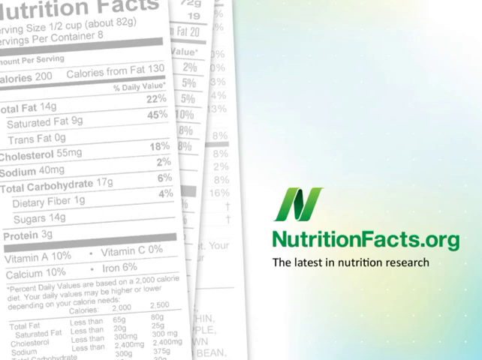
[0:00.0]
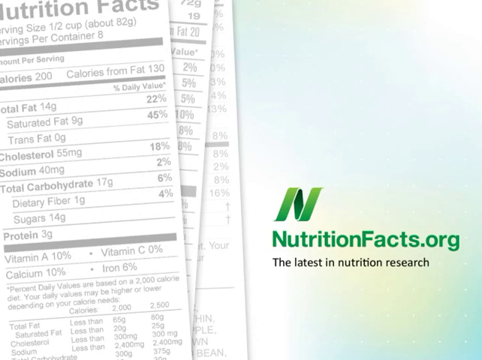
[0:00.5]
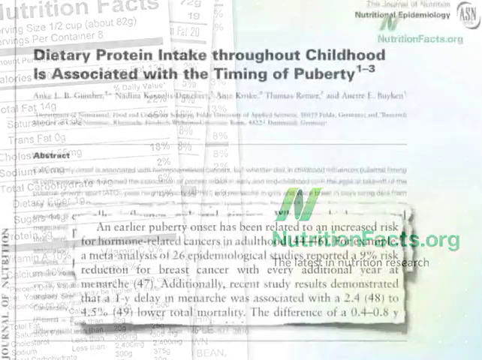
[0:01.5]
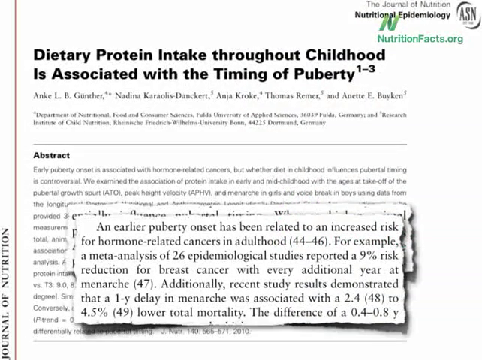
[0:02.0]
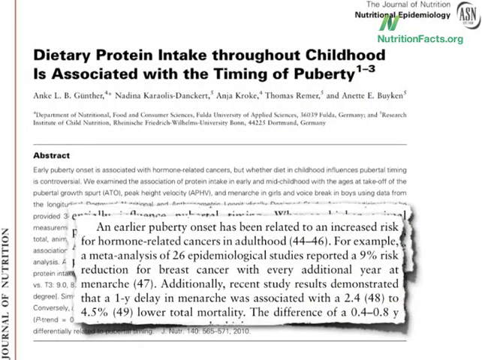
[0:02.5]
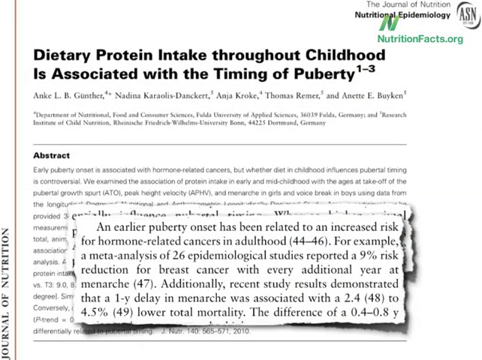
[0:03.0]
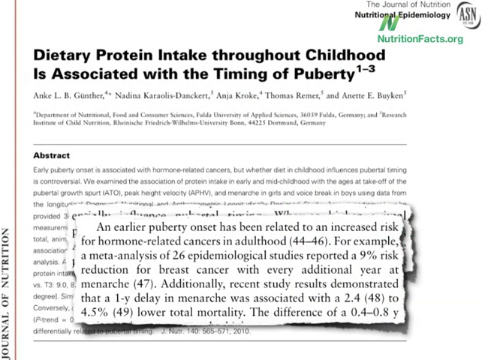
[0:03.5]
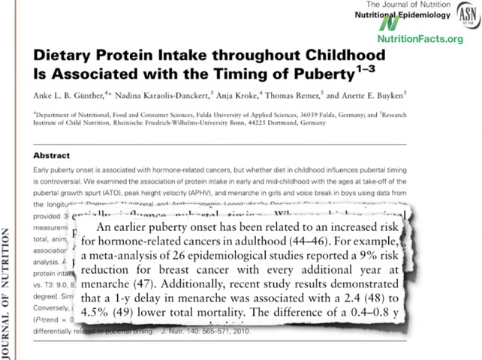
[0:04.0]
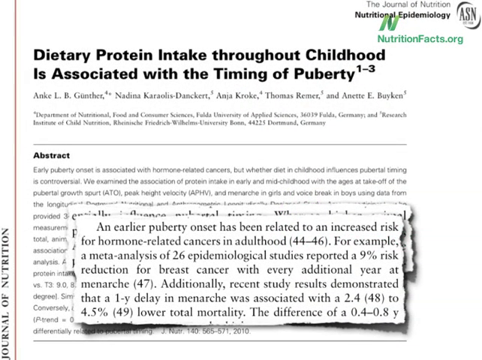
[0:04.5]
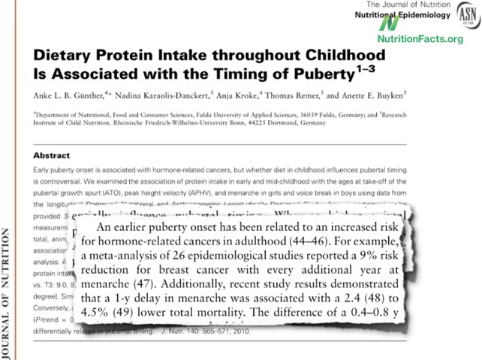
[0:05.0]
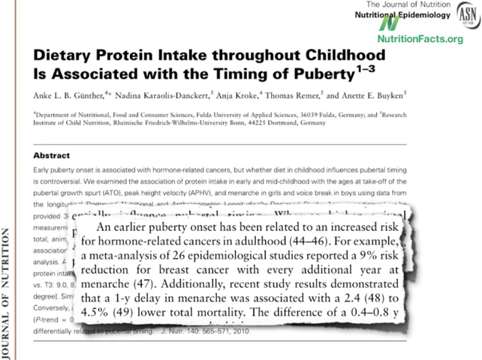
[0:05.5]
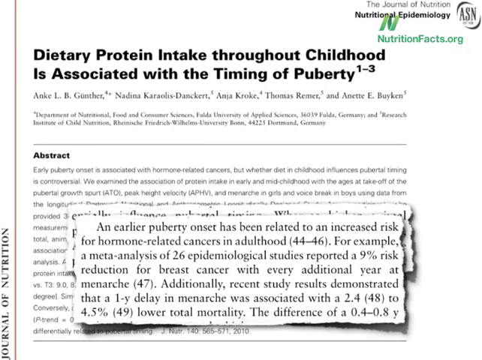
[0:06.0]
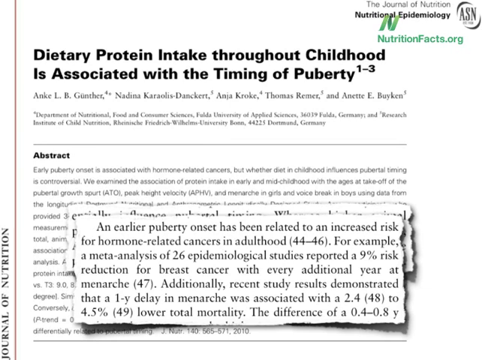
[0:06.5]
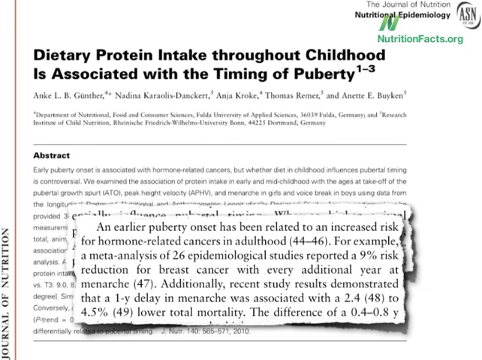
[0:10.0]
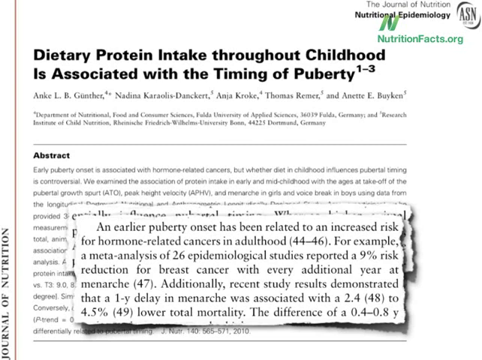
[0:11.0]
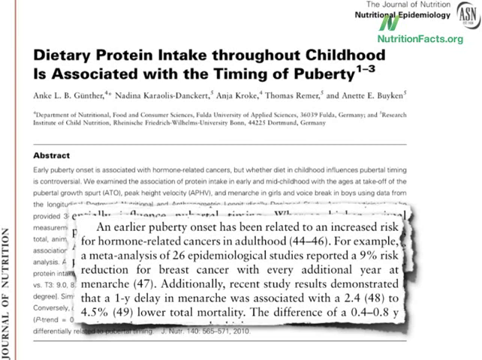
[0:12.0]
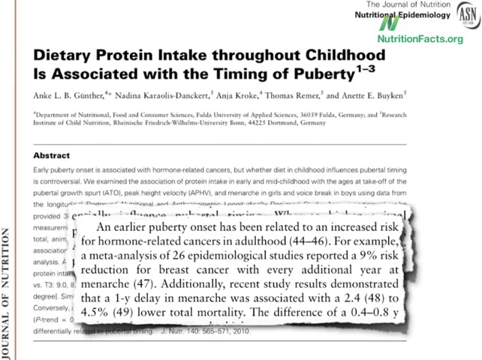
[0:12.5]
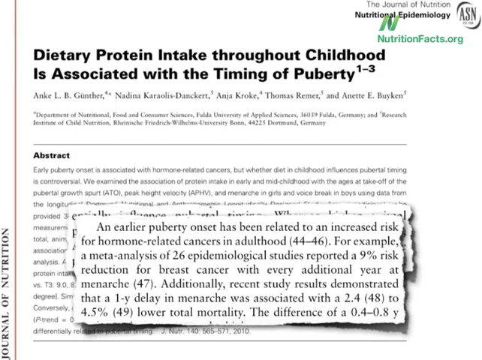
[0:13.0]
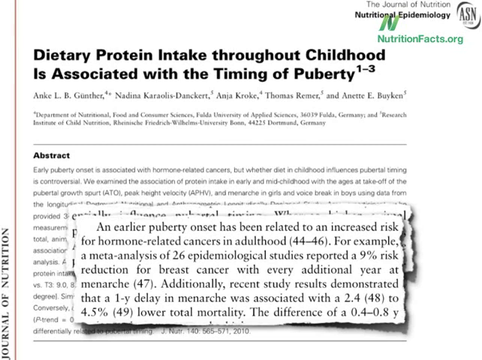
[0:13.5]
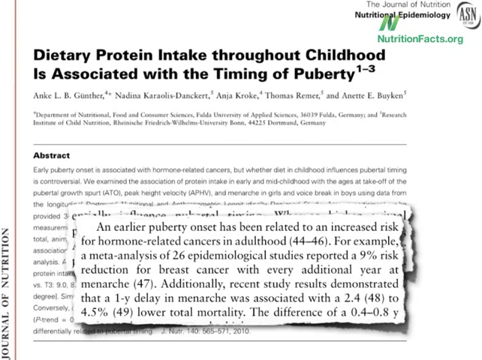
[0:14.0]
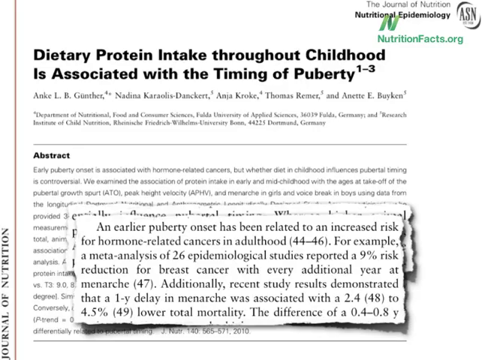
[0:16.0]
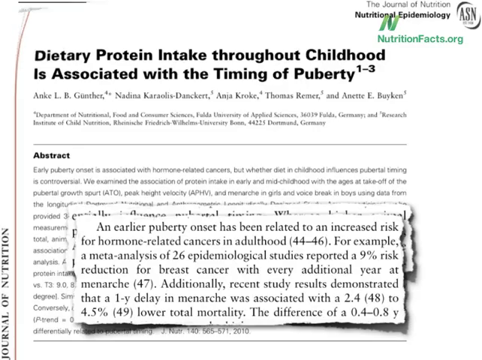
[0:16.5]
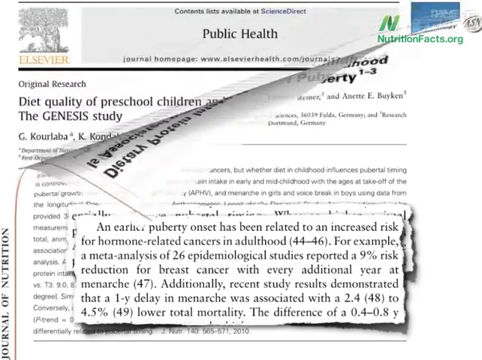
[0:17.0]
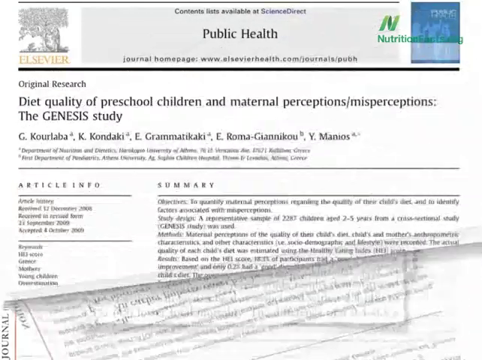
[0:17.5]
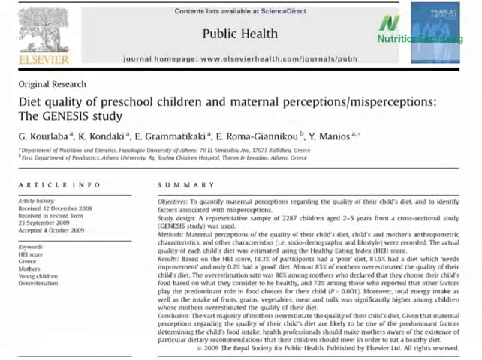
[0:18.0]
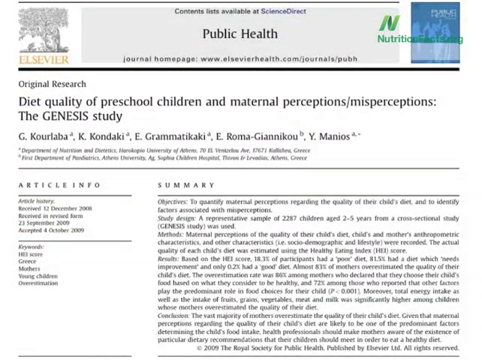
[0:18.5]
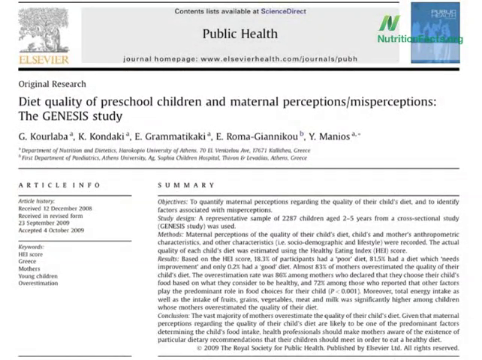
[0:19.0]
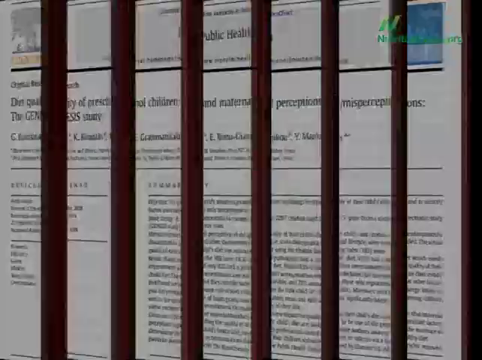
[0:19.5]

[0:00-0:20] A document, apparently about dietary protein, appears. At the start, a nutritionfacts.org logo in sort of green text is at the bottom right, and right below it the text reads "the latest in nutrition research." On the left is a nutrition label like those found on food products. Next, something like a news report appears, with the title at the top reading "dietary protein intake throughout childhood is associated with timing of puberty," and a quote at the bottom that is enlarged. The video then cuts quickly to another article that reads "diet quality of preschool children and maternal perceptions, misperceptions, the genesis study." The material seems to be about children's diet and how it relates to their development.